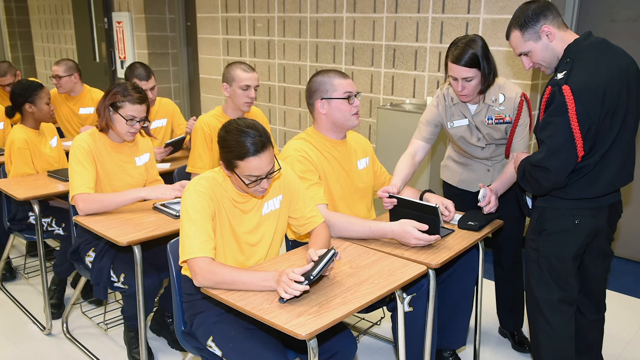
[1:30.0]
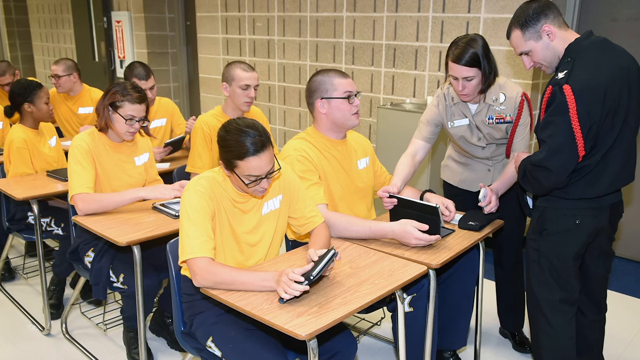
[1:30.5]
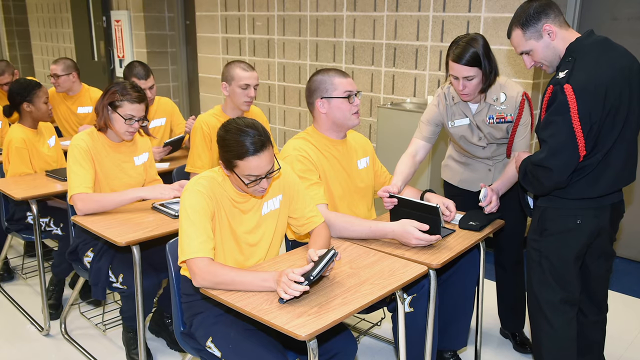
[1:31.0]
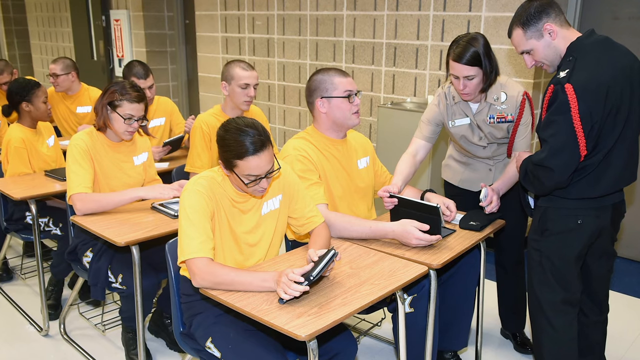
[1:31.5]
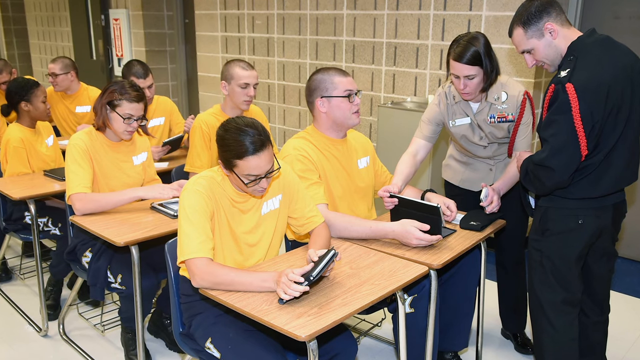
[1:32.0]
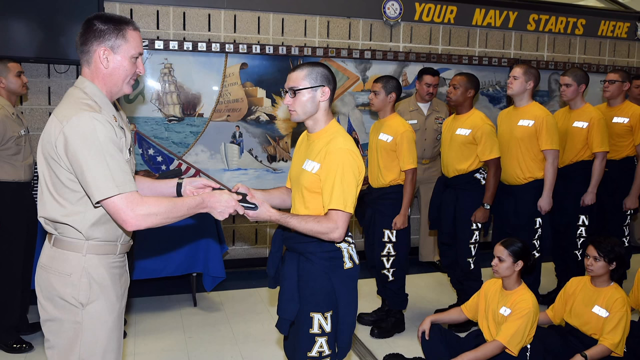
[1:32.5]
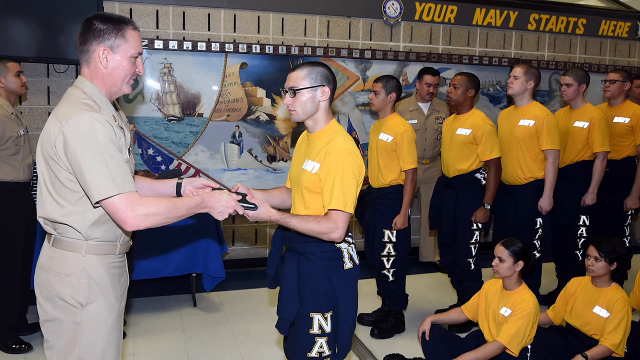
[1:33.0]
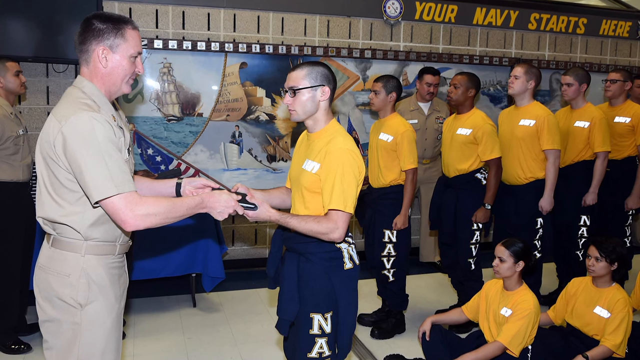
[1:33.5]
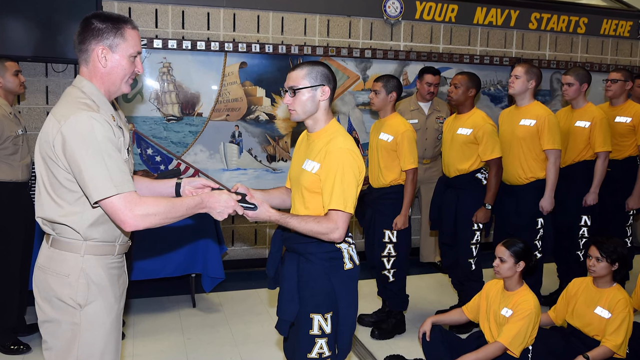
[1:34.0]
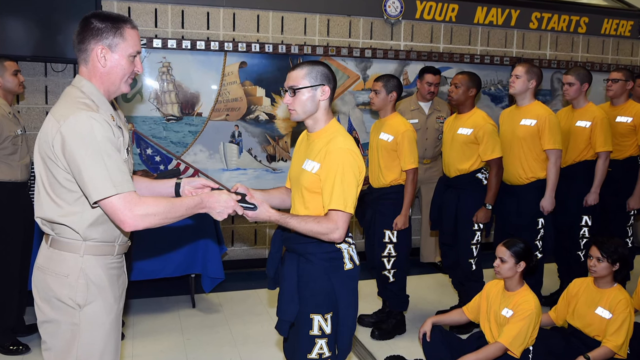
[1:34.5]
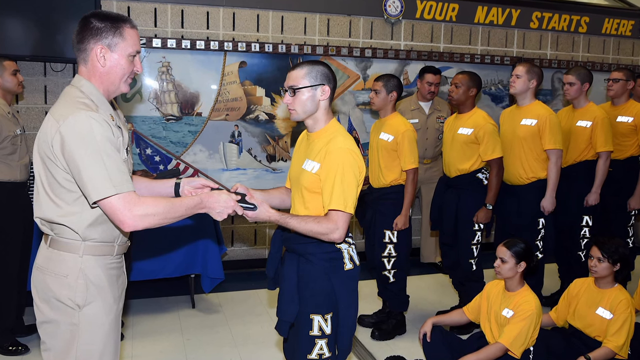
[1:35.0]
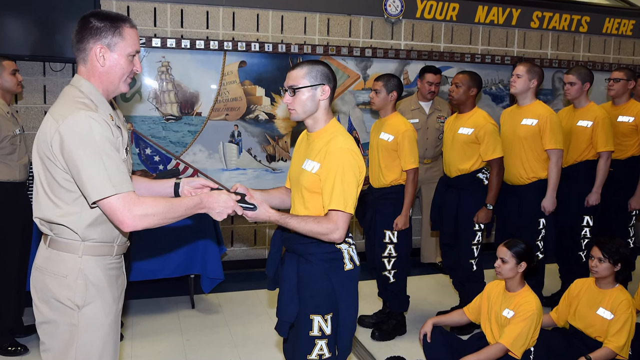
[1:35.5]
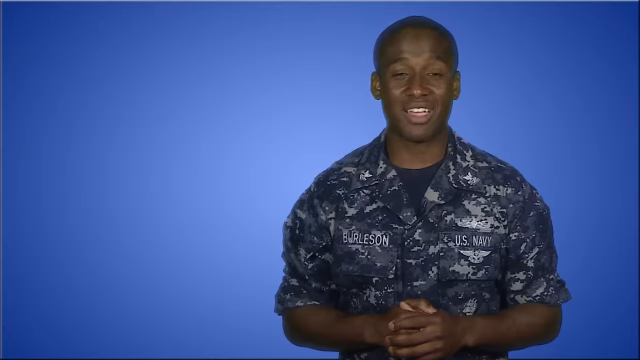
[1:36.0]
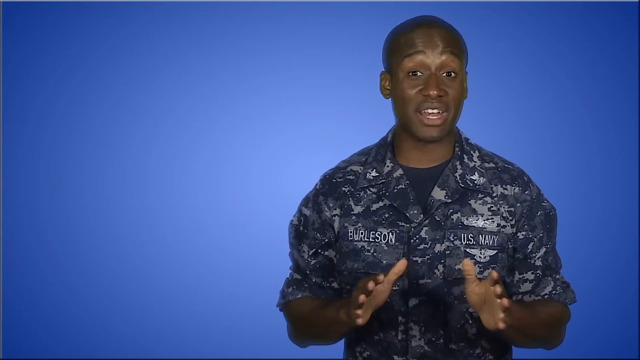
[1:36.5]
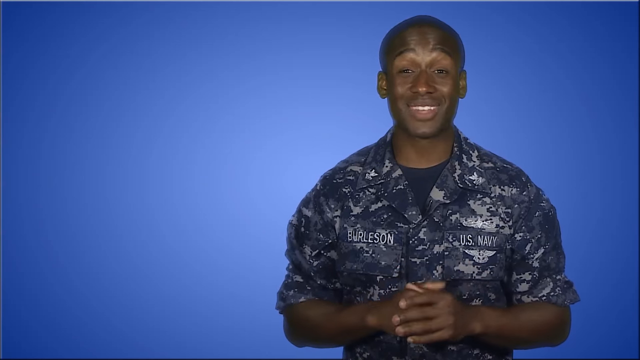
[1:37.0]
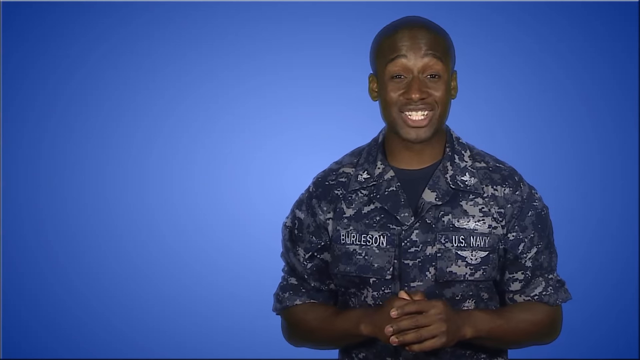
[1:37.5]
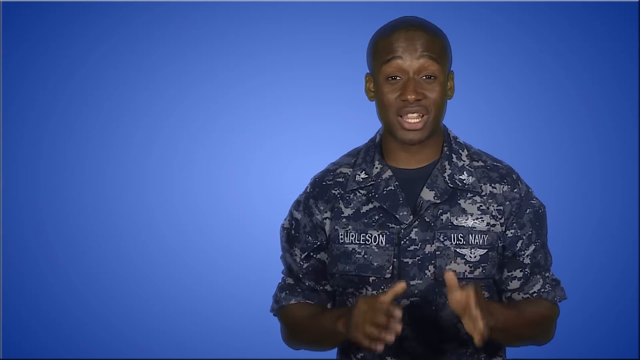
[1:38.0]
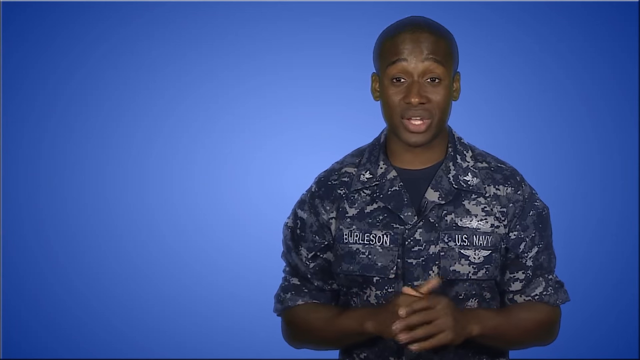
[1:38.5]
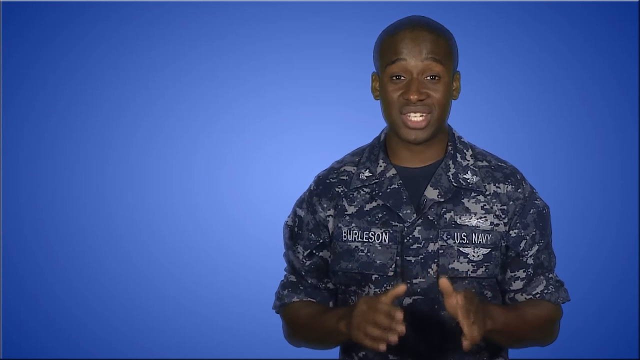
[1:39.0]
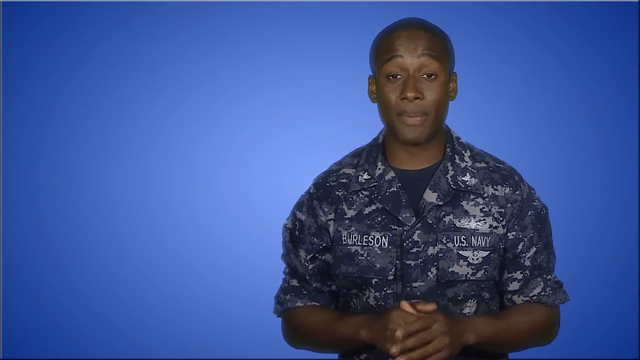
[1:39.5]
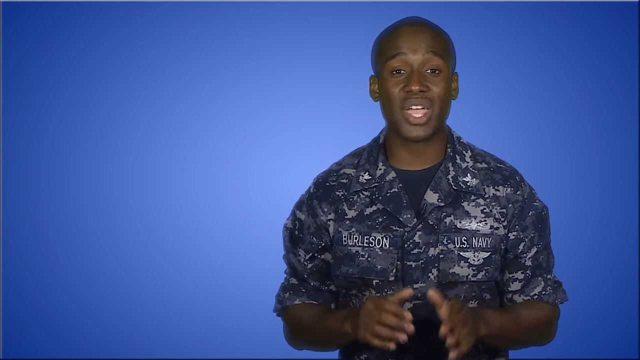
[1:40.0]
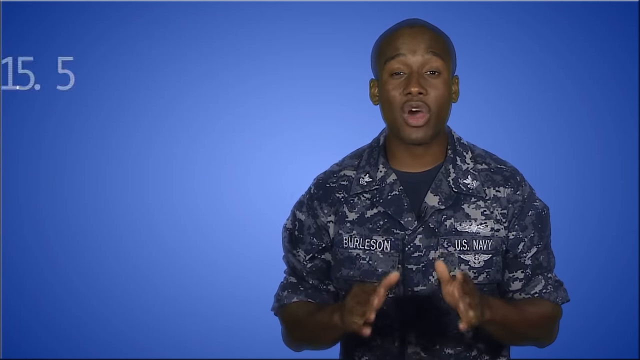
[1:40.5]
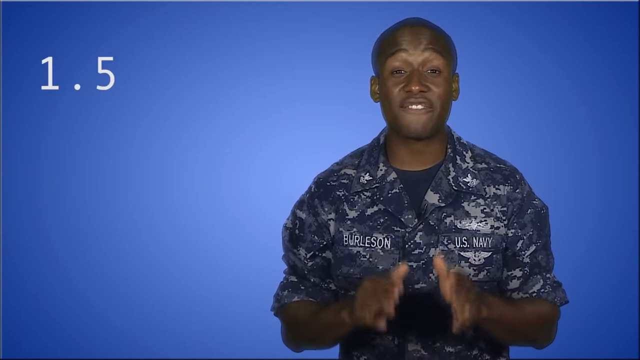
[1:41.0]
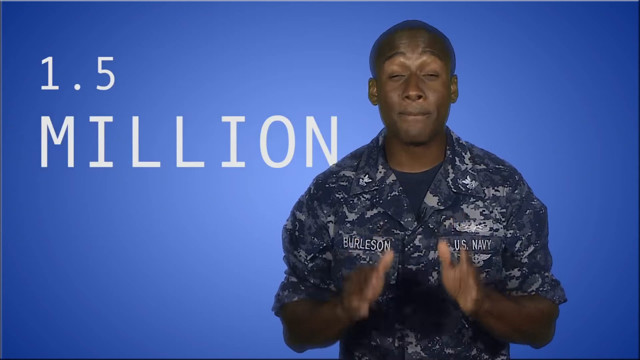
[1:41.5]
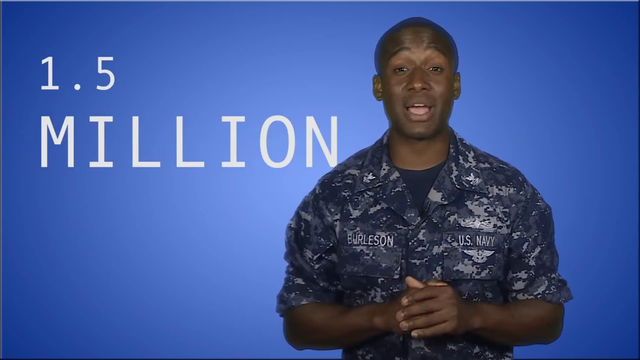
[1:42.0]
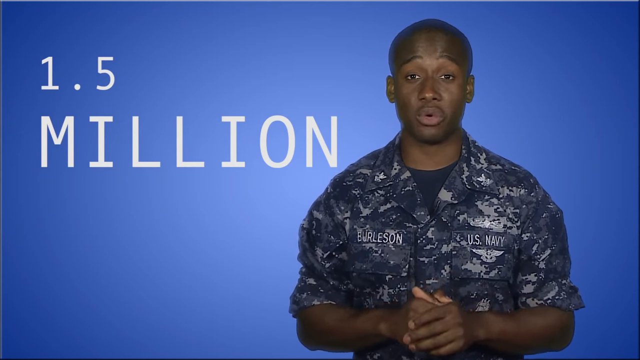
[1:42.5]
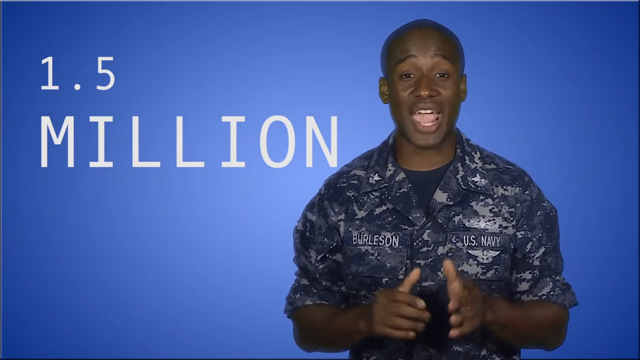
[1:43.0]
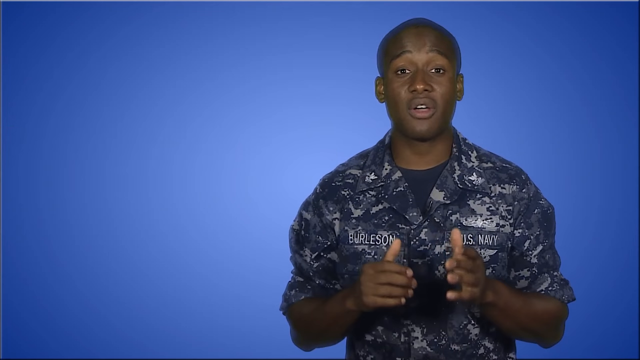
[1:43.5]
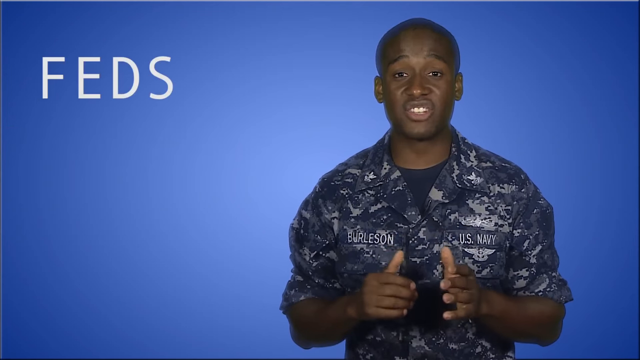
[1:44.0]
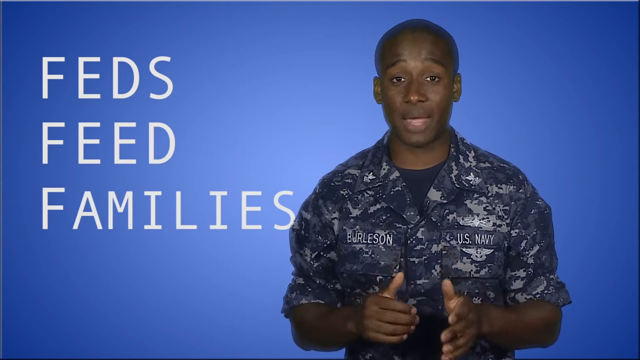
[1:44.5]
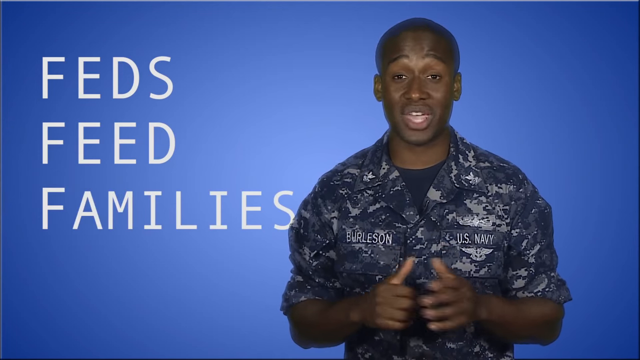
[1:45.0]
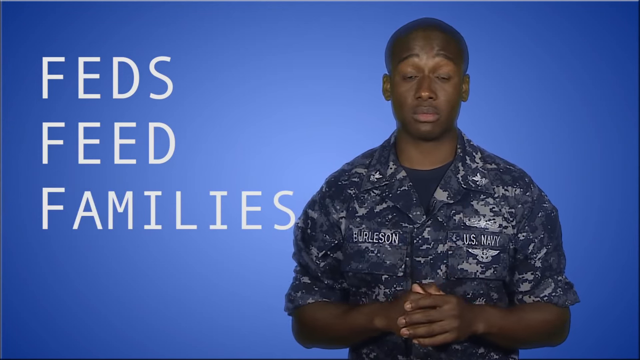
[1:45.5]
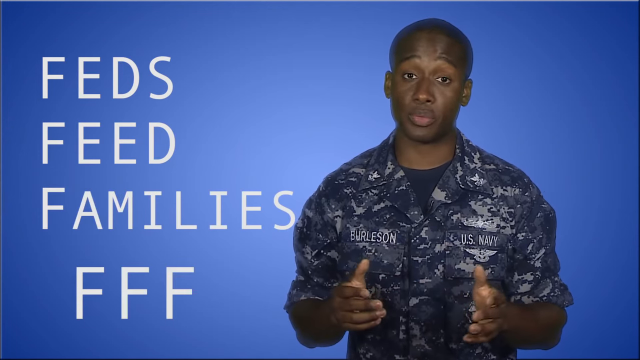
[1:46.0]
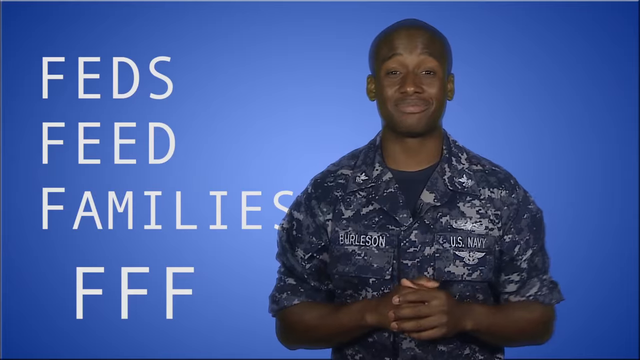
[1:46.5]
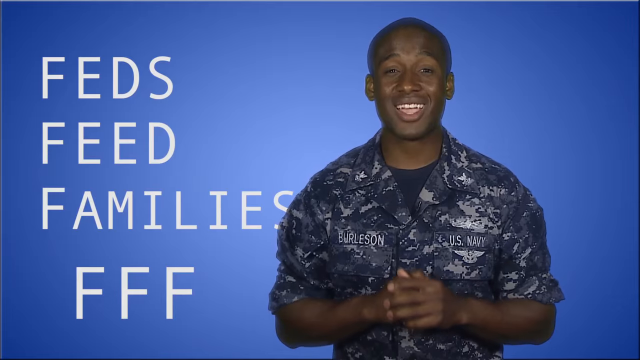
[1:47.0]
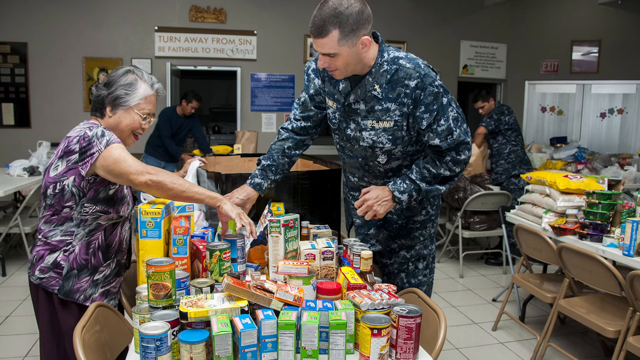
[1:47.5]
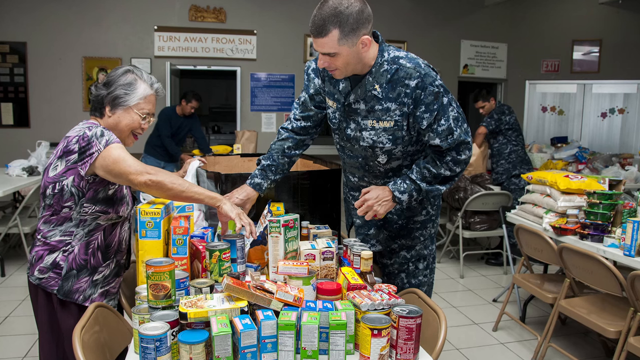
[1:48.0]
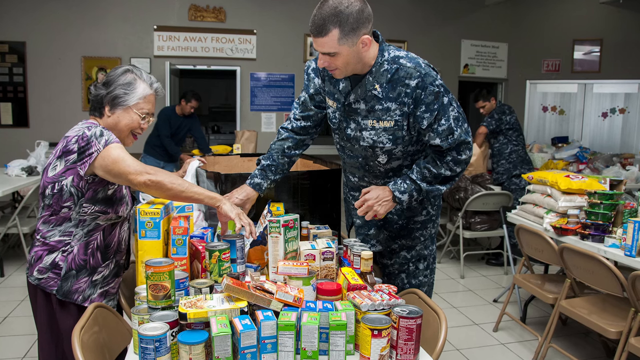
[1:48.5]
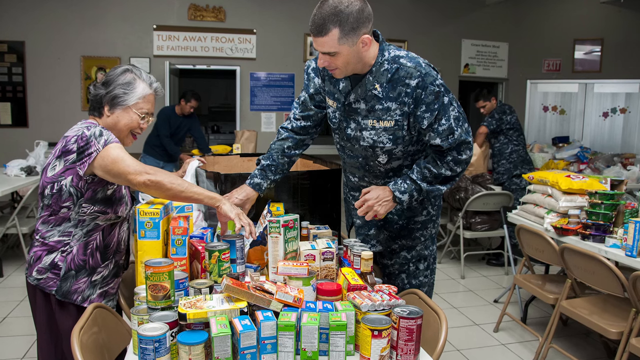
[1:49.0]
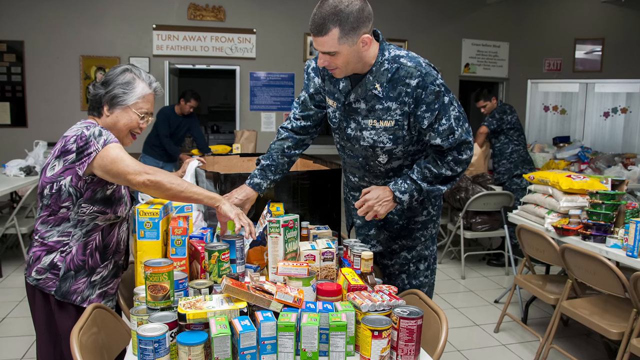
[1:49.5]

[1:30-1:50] An image shows a small classroom with a row of desks going back, two to a row, and male and female students all wearing yellow shirts. They appear to have some type of tablet; some students hold them and others have them resting on the desk. In the front row, the student on the right may be having trouble with his tablet, as two instructors, a male and a female, look at the device to help. Another image shows what looks like some type of award ceremony: a row of students in yellow shirts is lined up, and at the front a young man accepts a flat black object from an older Navy officer in a tan, short-sleeved button-up shirt. There is also a row of what look like female students sitting on the ground. On the top of the wall it says "Your Navy starts here" in yellow, and underneath are a few Navy-related photos of ships at sea and soldiers. Then, against a blue screen, toward the middle but slightly to the right, a young Black male Navy officer, with "Burleson" on the right side of his chest and "U.S. Navy" on the left, is seen from the waist up talking to the camera. On the left side of the screen, large white letters and numbers read "1.5 million"; that text disappears, and "feds feed families" appears with "FFF" underneath. Another still image shows what looks like a room with tables set up, apparently with lots of groceries stacked on them: one table with lots of dry goods and another with large bags of what look like rice and chips. Navy officers in blue, gray, greenish-looking fatigues appear to be working or volunteering, and an older woman looks through some of the groceries.